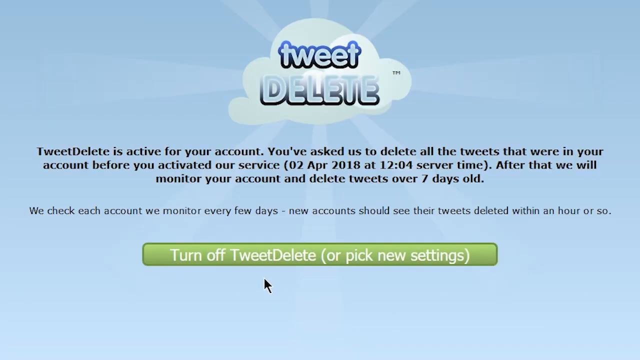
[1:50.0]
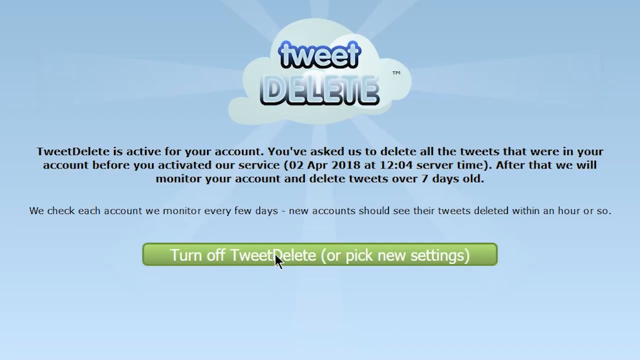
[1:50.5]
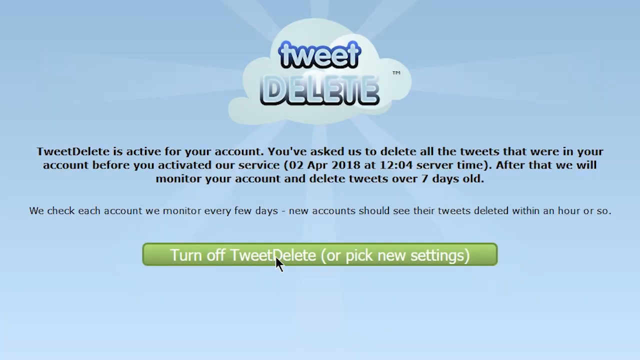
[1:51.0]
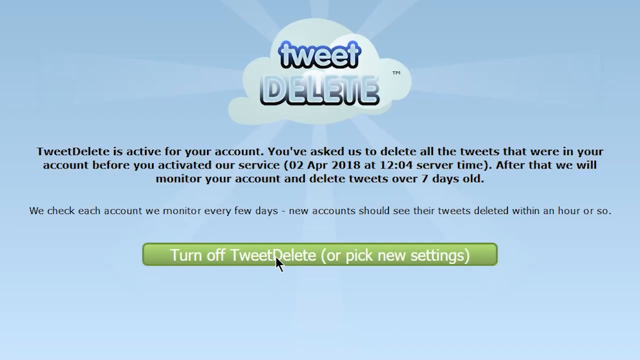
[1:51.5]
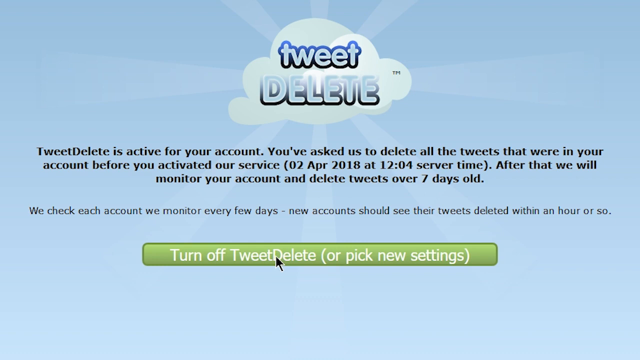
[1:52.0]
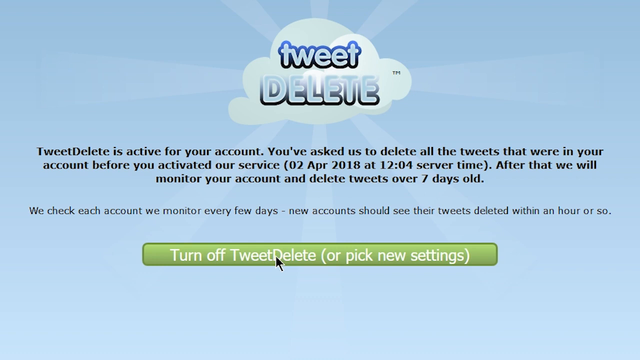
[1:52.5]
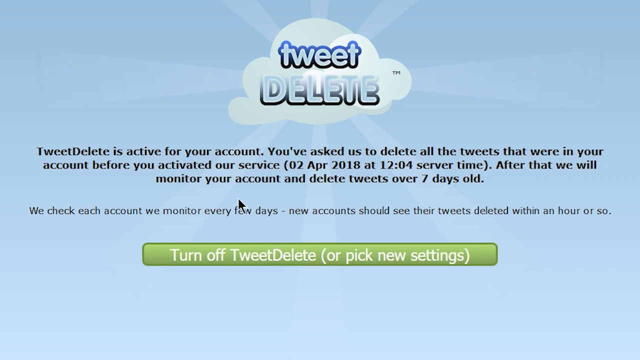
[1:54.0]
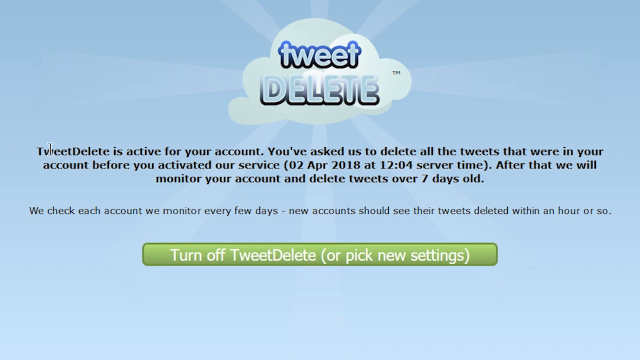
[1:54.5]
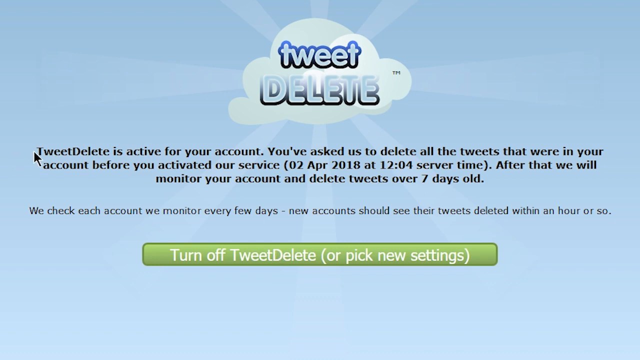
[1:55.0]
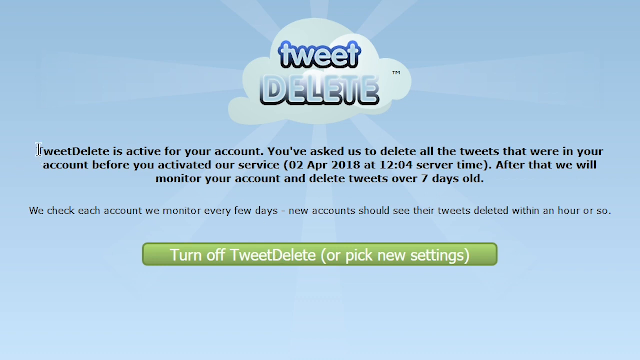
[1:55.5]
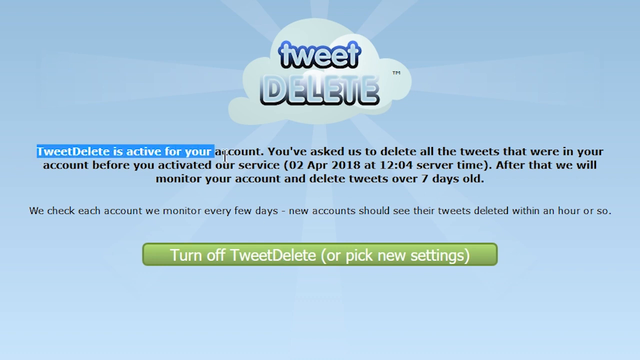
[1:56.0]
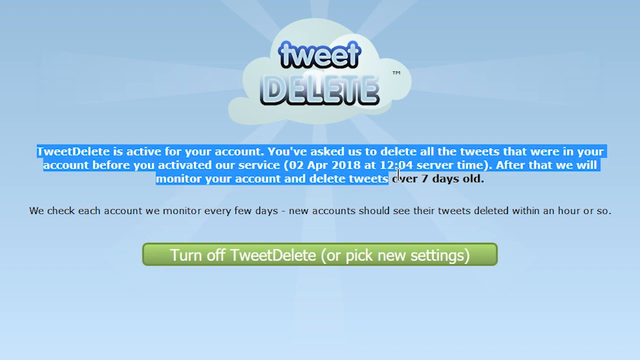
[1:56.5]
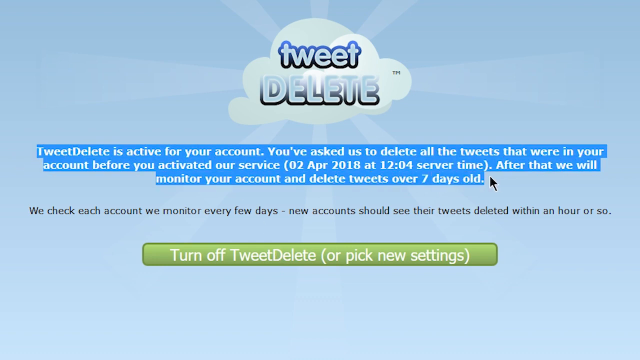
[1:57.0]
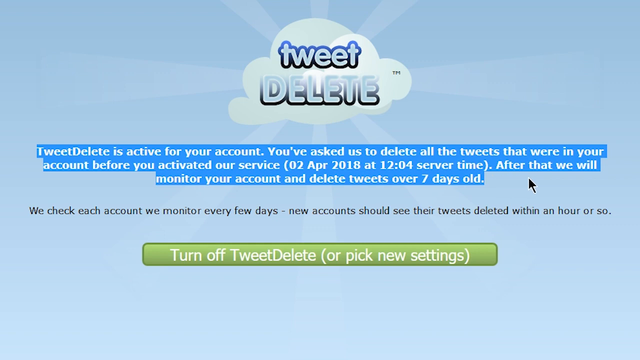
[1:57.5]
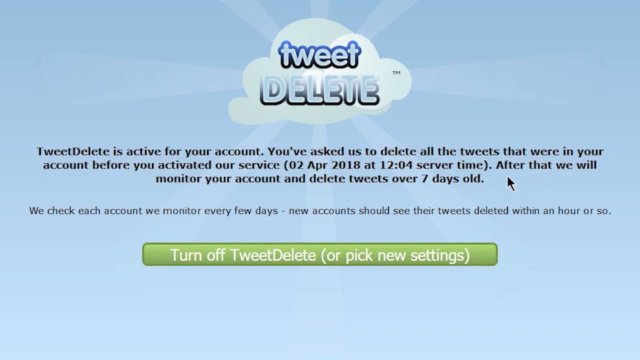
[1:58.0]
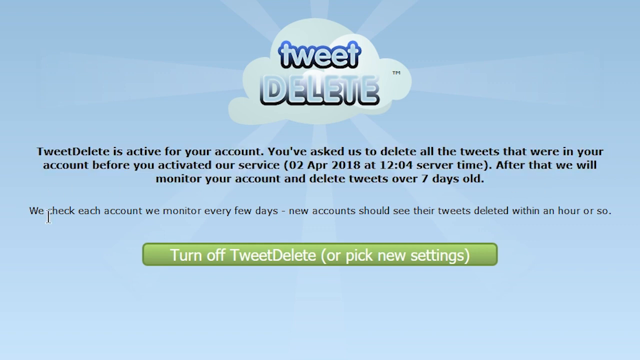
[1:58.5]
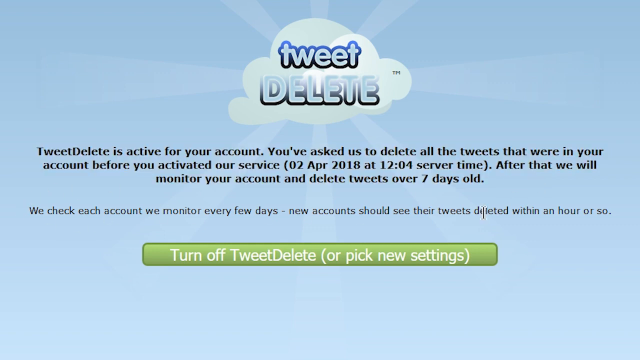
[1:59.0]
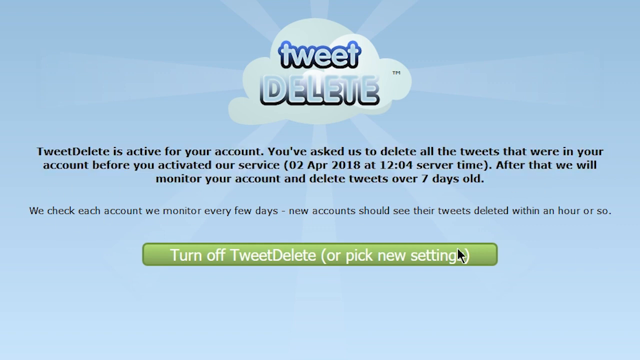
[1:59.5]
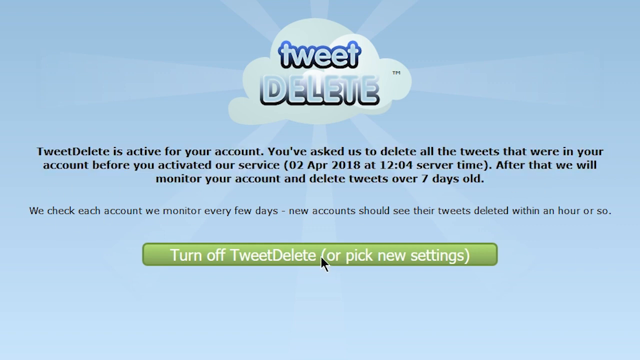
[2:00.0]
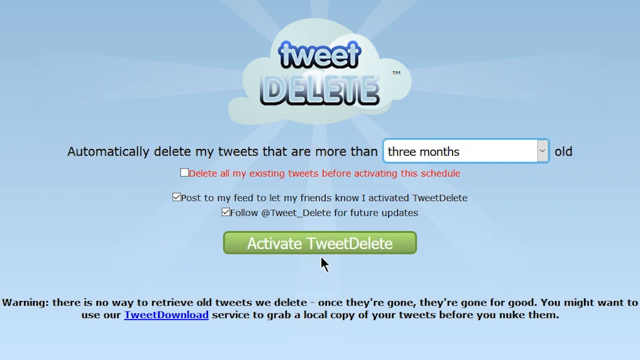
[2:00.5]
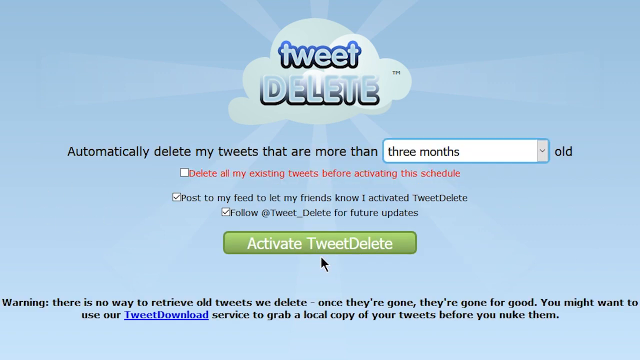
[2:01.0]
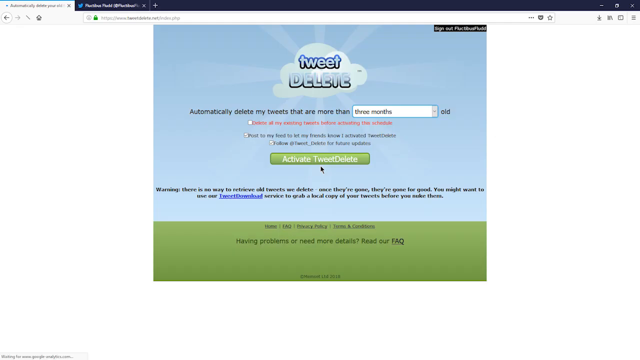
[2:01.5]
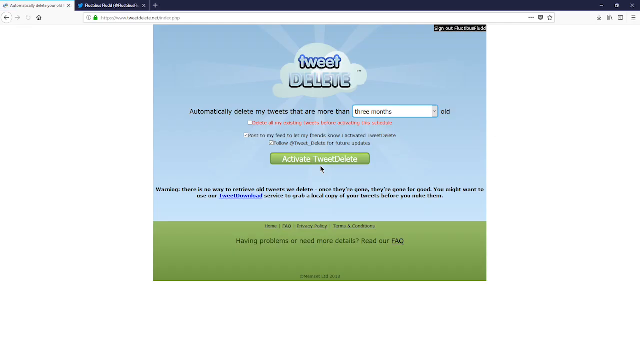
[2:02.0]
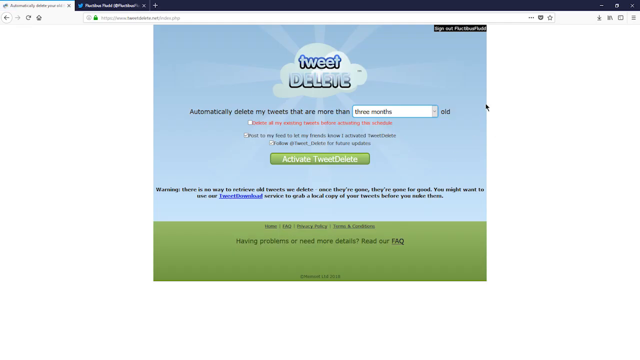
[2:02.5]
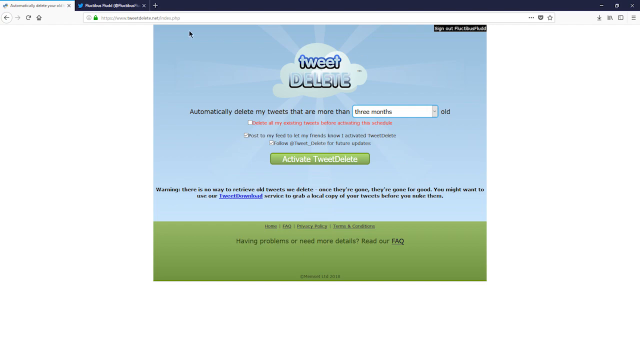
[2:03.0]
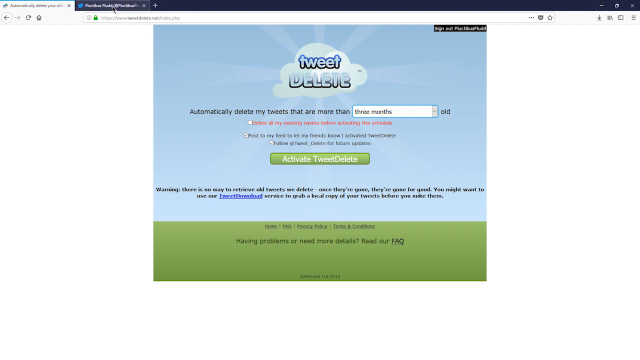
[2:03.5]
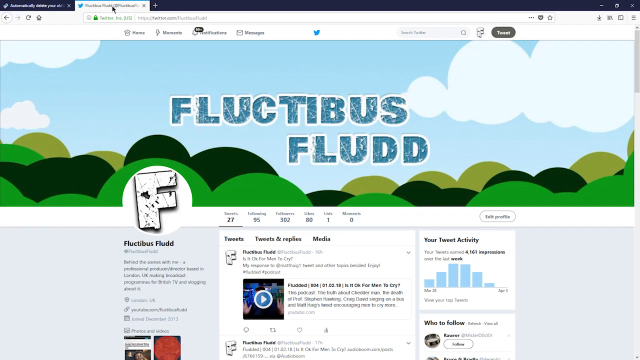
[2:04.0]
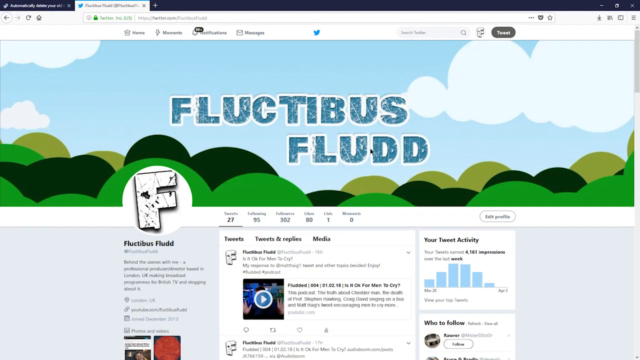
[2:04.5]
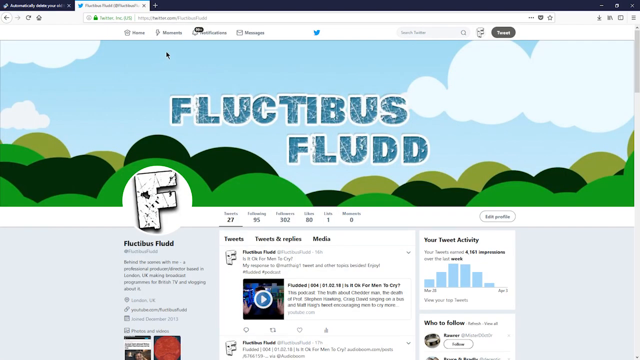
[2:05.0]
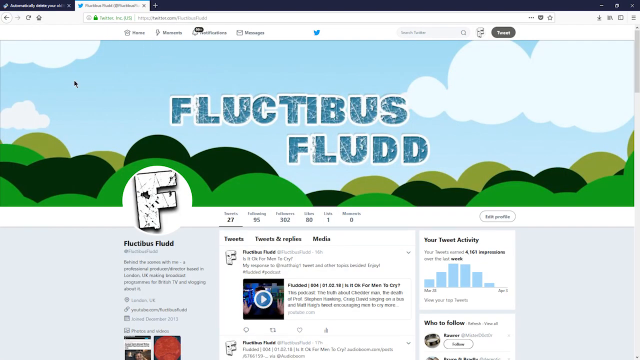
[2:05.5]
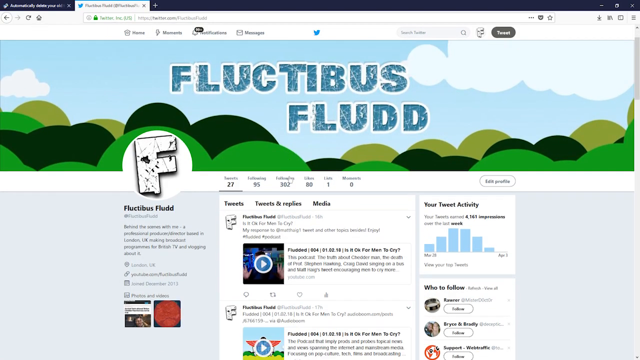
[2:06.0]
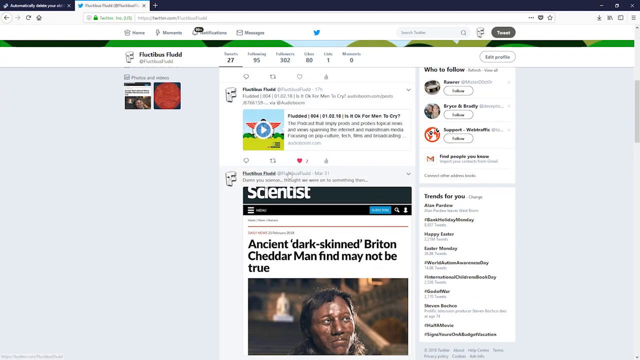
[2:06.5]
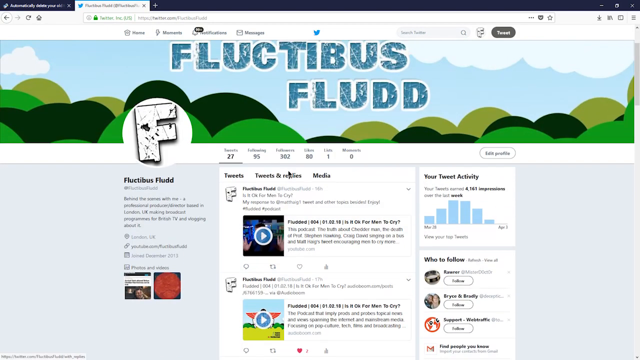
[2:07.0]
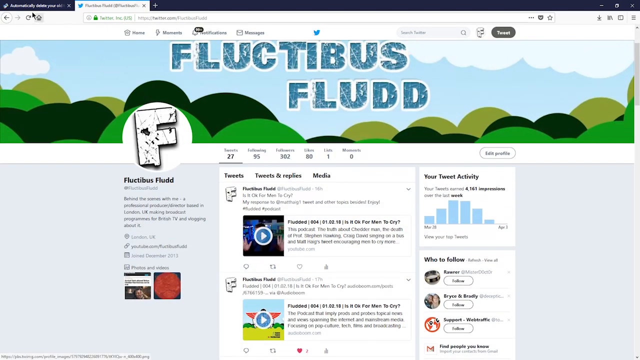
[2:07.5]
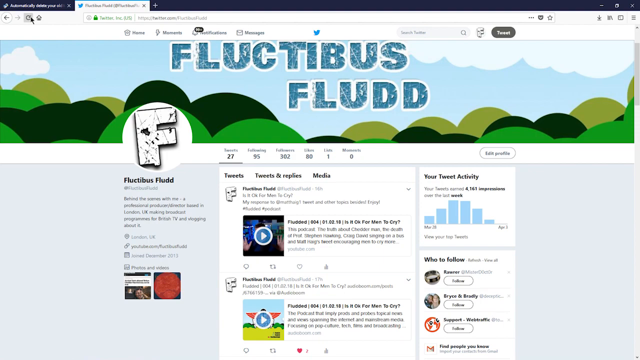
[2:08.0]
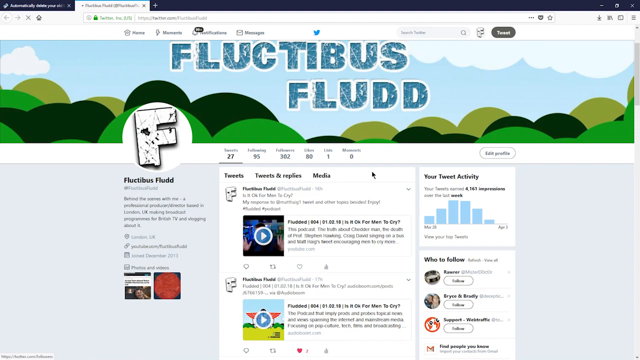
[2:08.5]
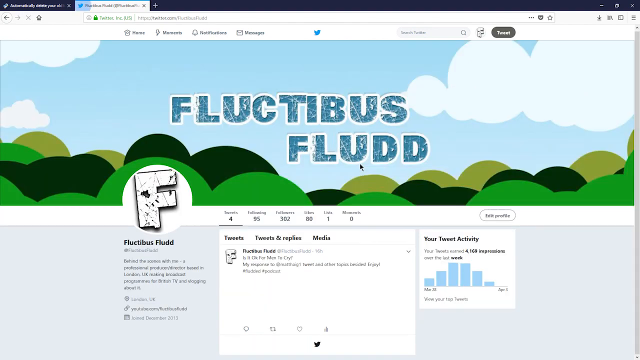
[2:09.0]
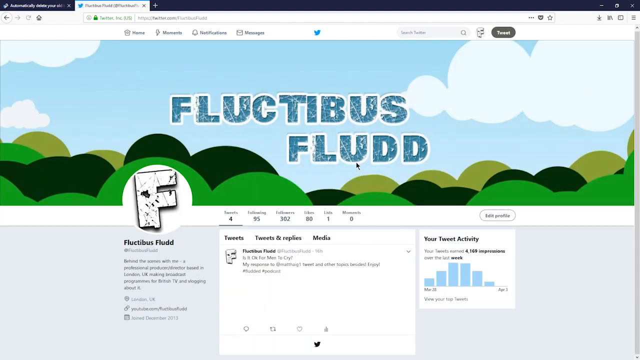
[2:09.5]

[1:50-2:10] An image with a light blue background has a white cloud in the middle at the top with "TweetDelete" inside it. Underneath, a message in black font says "Tweet Delete is active for your account. You've asked us to delete all the tweets that were in your account before you activated our service (02 April 2018 at 12:04 server time). After that, we will monitor your account and delete tweets over seven years old." Below it, in smaller, less bold black font, it says "we check each account we monitor every few days - New accounts should see their tweets deleted within an hour or so." Underneath is a long, light green rectangular button that says "turn off Tweet Delete or pick new settings". The cursor hovers over the button without clicking, then goes to the paragraph under the cloud and highlights it in blue. The user then goes down and hits the Turn Off Tweet Delete button. The page changes to the settings for starting Tweet Delete again: "automatically delete my tweets that are more than", a drop-down menu showing "three months", and three checkboxes with the last two checked and the top one unchecked. The view zooms out a bit to show the whole web page and browser, and the user clicks the second browser tab, which opens the Twitter account page for a user named Fluctibus Fludd. The user scrolls down the page a little, scrolls back up, then hits the browser's refresh button, and the page reloads.